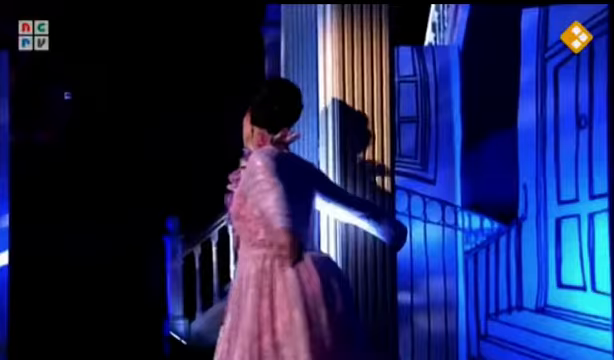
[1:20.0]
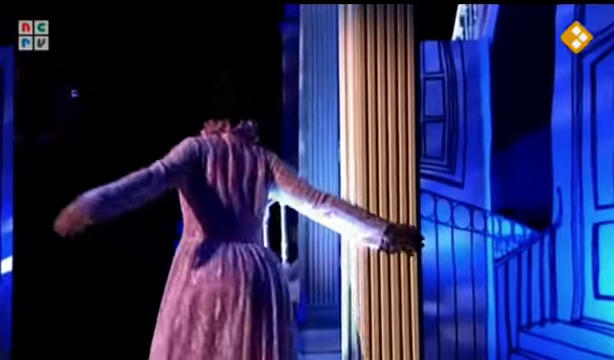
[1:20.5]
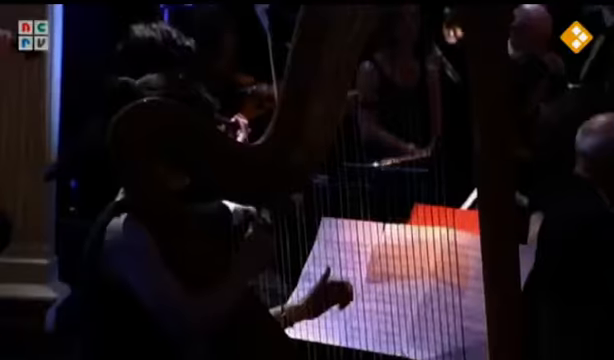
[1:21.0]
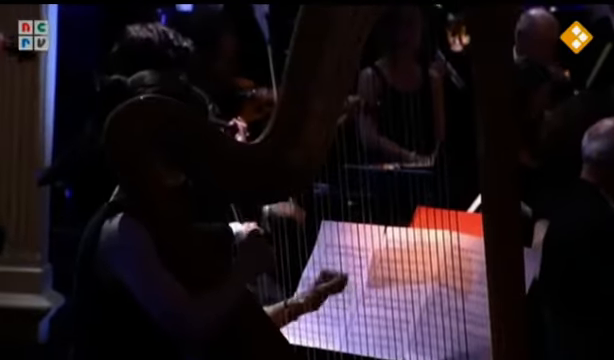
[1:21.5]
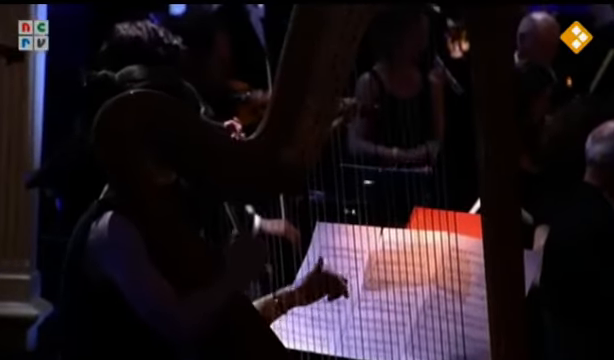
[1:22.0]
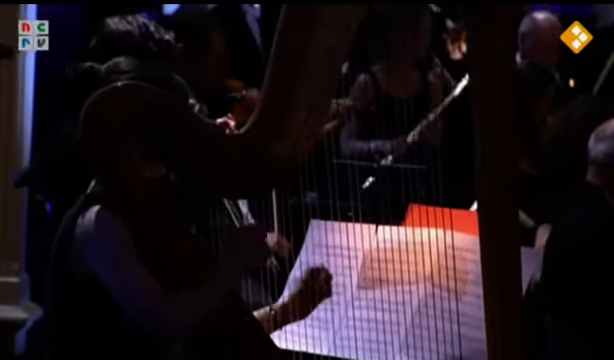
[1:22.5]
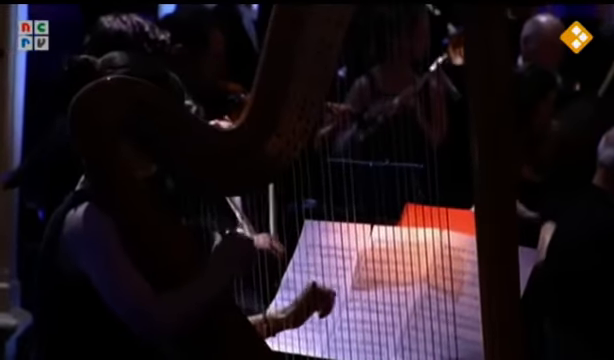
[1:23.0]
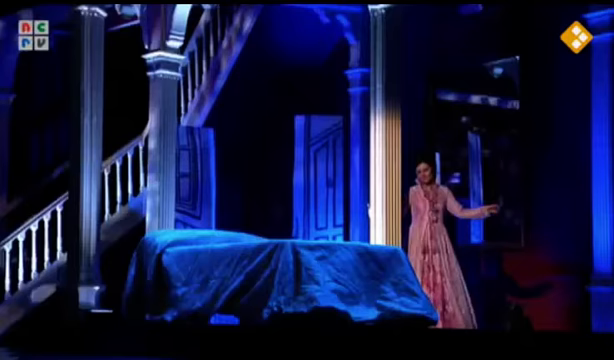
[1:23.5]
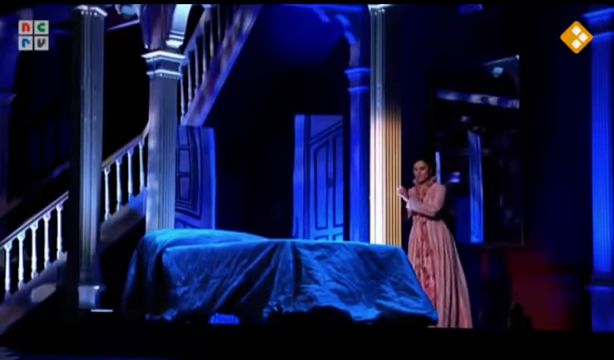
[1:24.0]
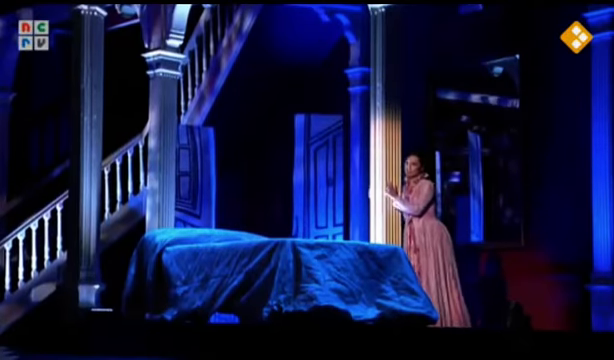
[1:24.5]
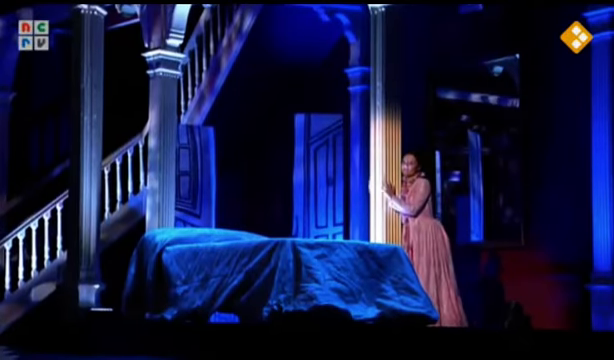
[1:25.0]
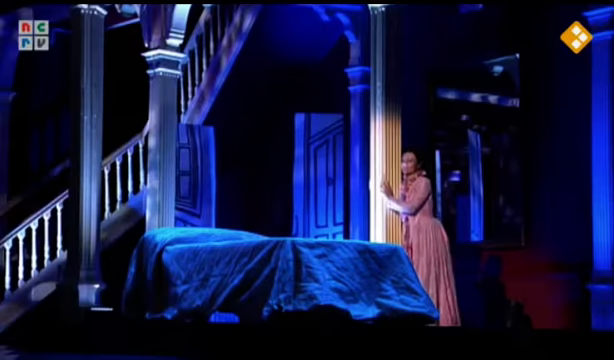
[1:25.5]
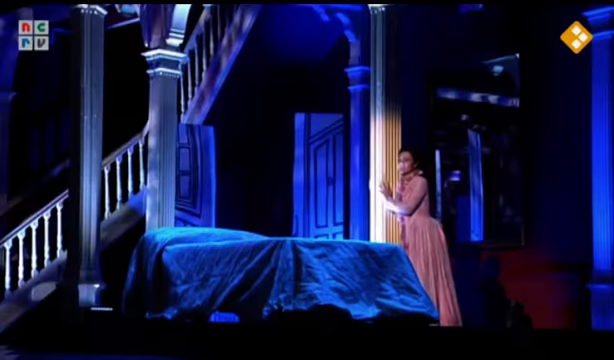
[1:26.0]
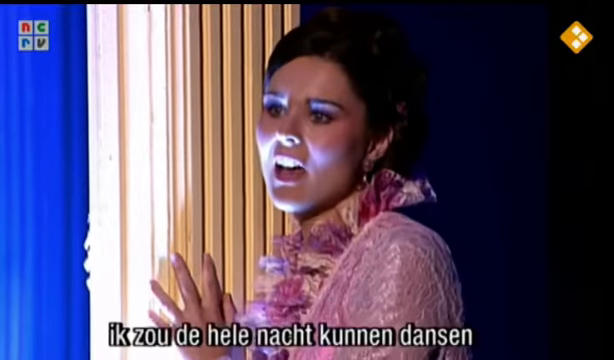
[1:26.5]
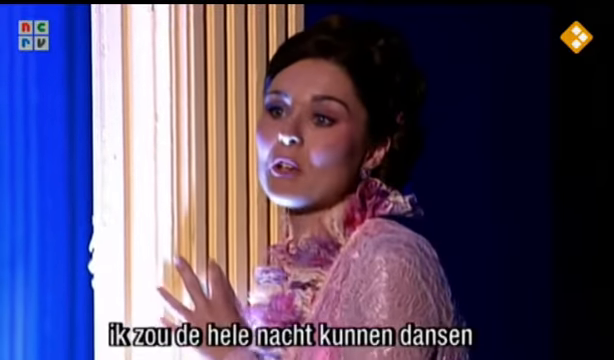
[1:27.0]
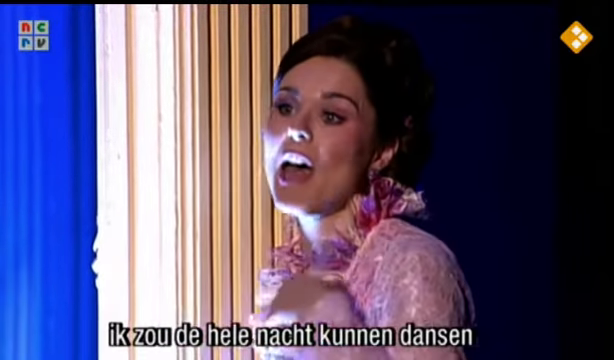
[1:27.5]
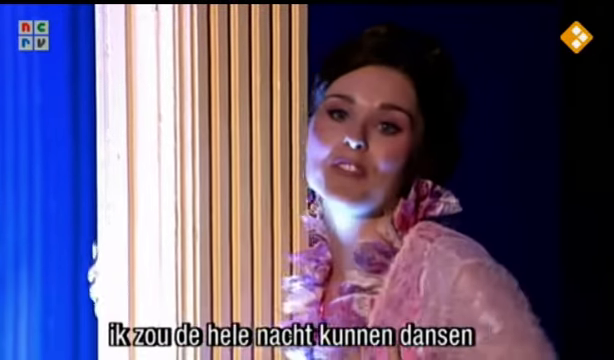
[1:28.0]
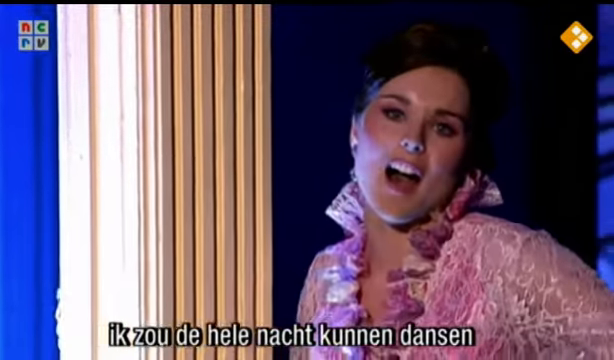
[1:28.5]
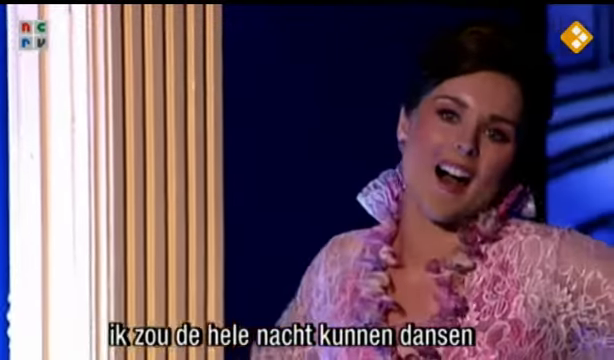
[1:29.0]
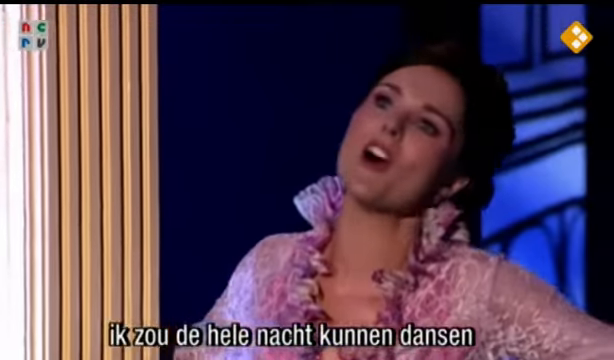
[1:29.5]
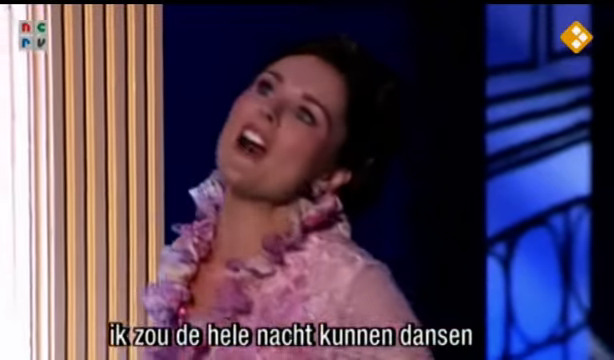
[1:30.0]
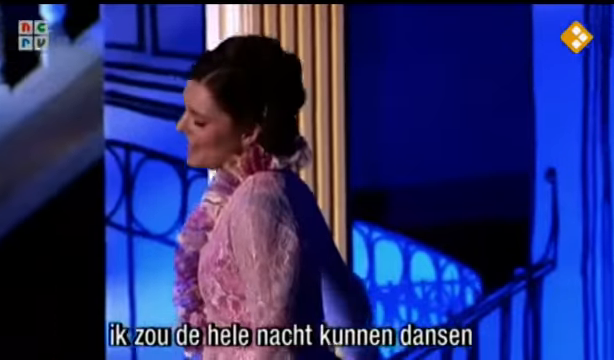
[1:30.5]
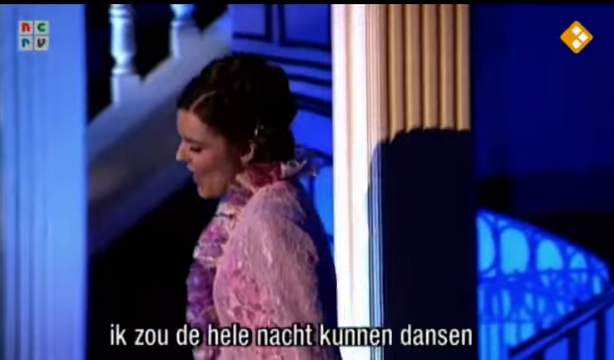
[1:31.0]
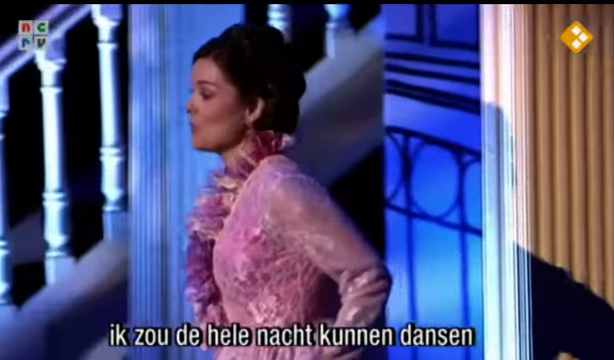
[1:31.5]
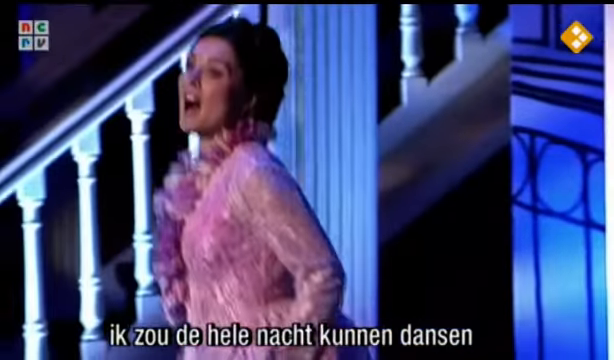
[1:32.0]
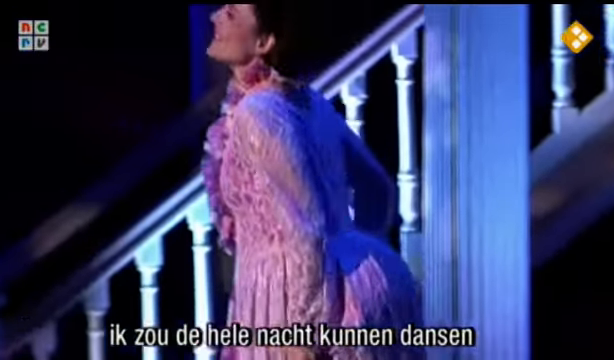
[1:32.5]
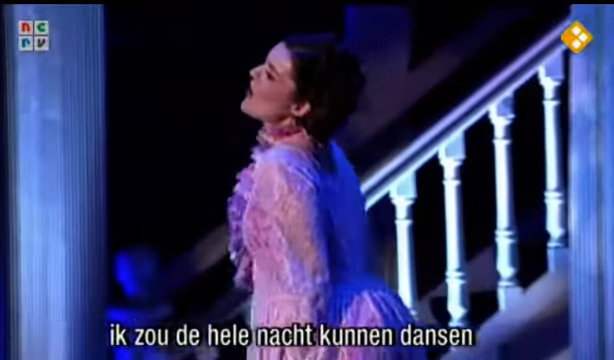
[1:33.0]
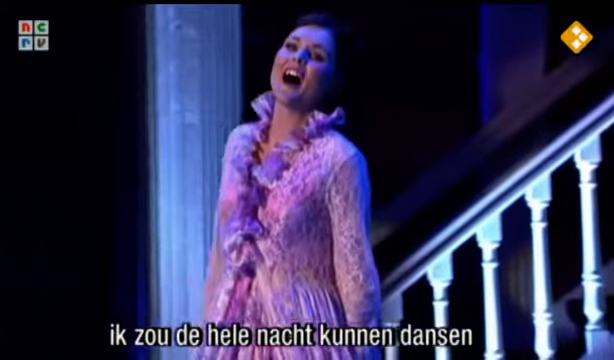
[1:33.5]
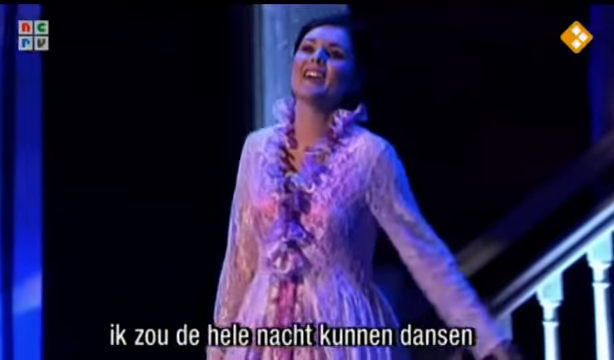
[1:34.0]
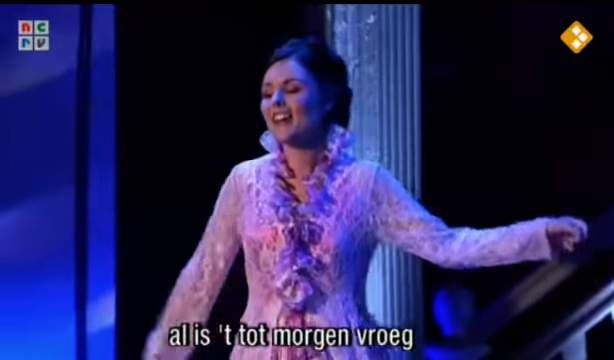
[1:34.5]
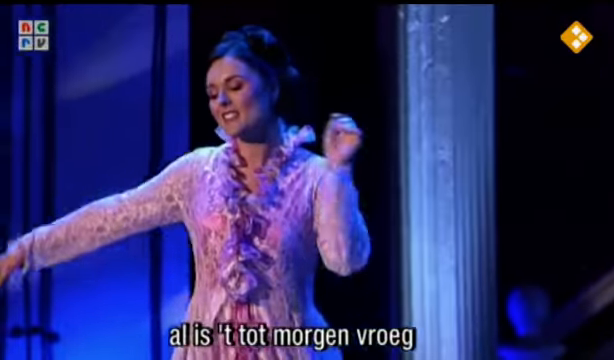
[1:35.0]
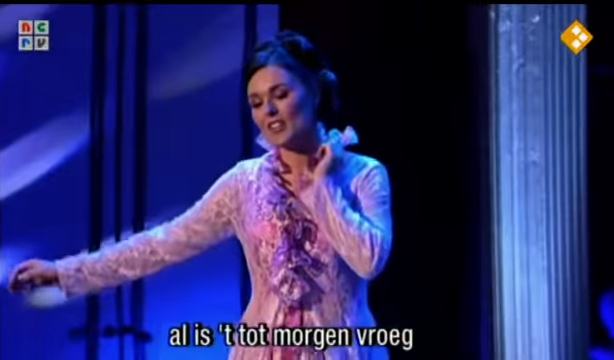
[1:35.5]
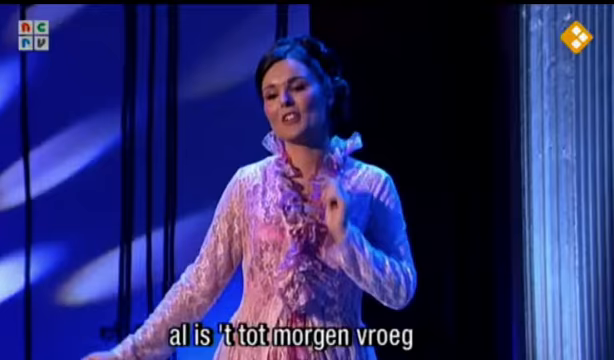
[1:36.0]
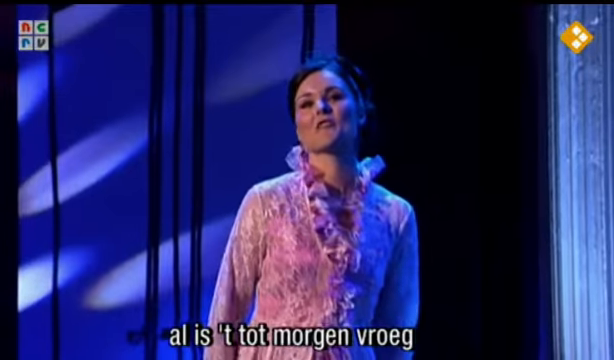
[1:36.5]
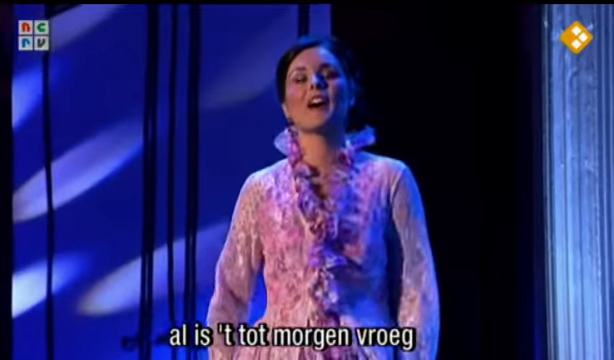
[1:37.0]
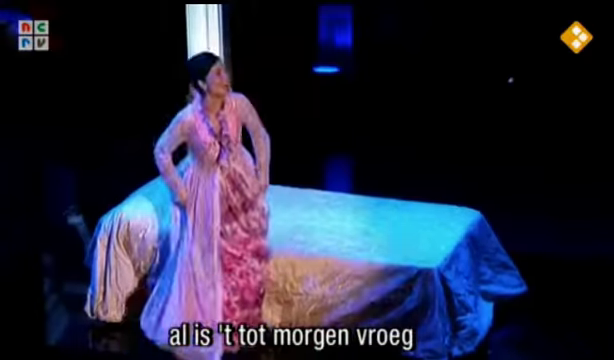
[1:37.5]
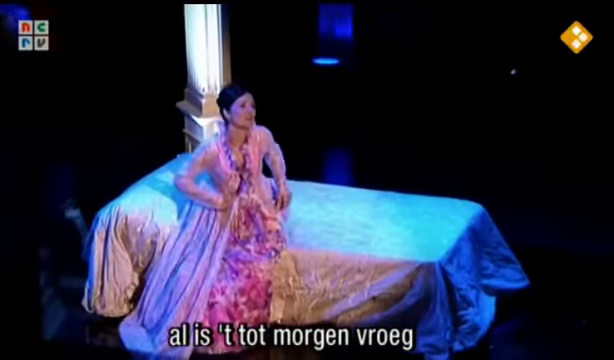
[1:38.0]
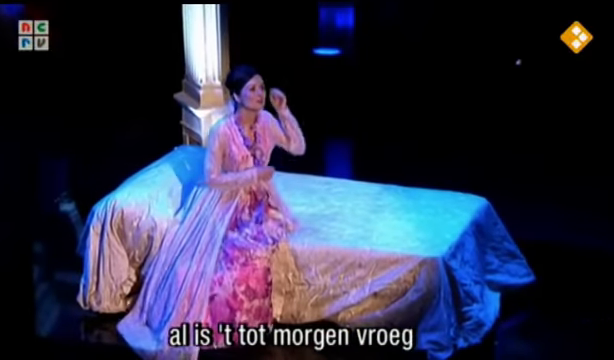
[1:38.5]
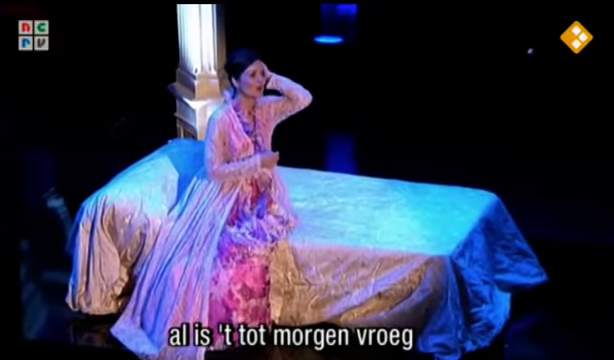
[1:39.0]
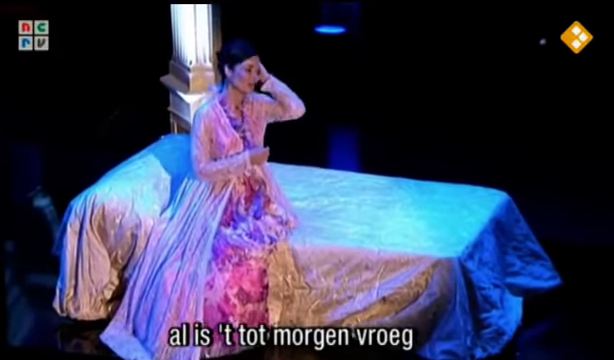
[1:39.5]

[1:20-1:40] The singer in the pink dress slowly walks around the pillar, holding onto it with one arm. A shot of the orchestra pit shows a harp player playing a large harp and a few flute players who pick up their flutes in unison to begin their part. The camera returns to the woman on stage, who leans against the pillar with her cheek resting on top of it. She keeps singing, waving her arms back and forth and moving to different parts of the stage. She goes to the bed on stage and sits down, and it looks like she starts to take out her hair as if getting ready for bed.